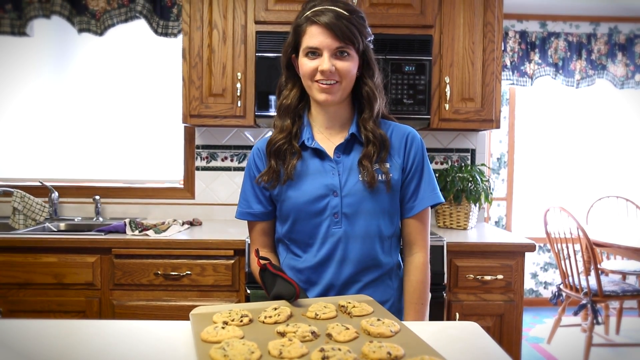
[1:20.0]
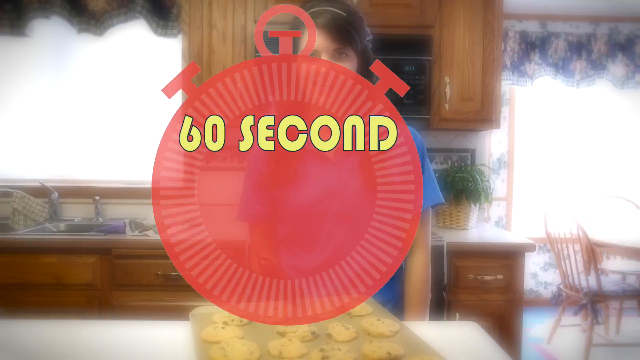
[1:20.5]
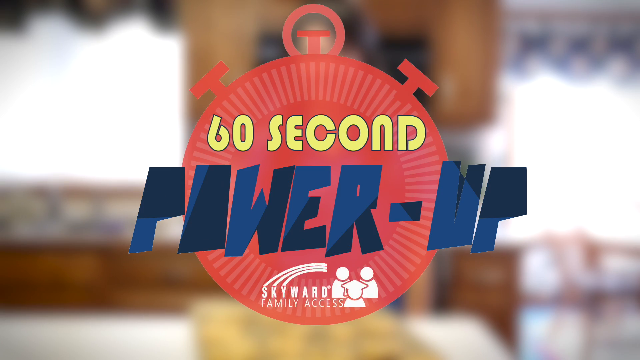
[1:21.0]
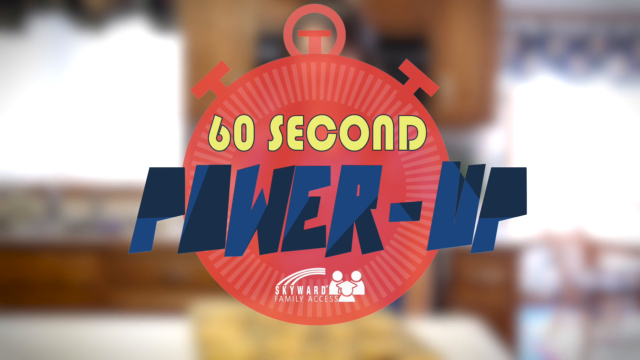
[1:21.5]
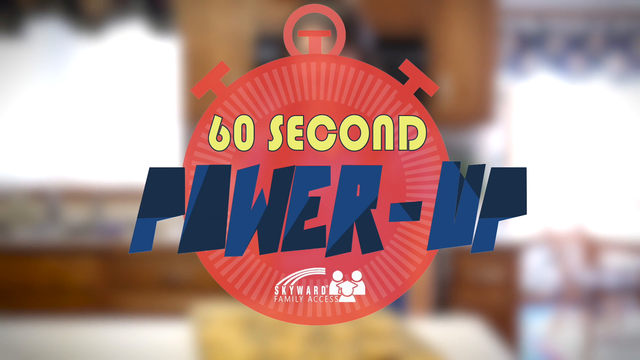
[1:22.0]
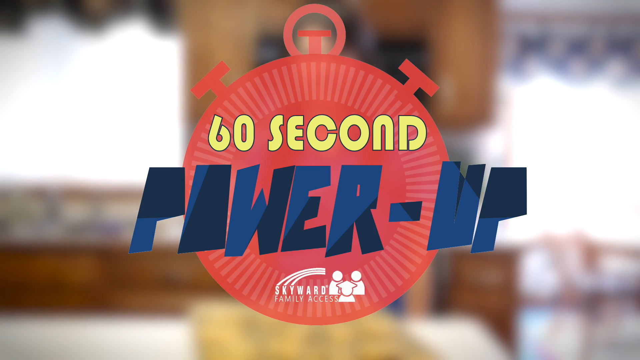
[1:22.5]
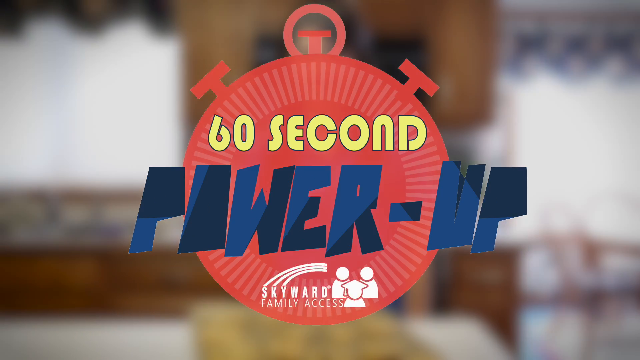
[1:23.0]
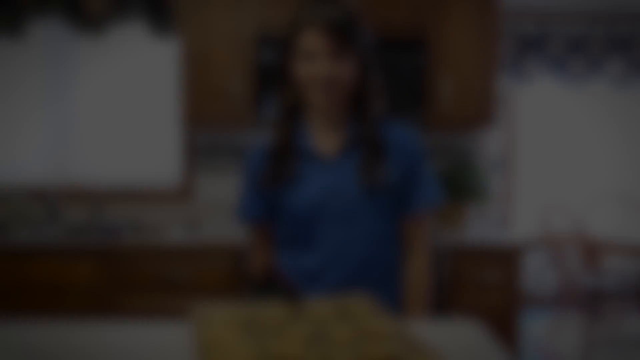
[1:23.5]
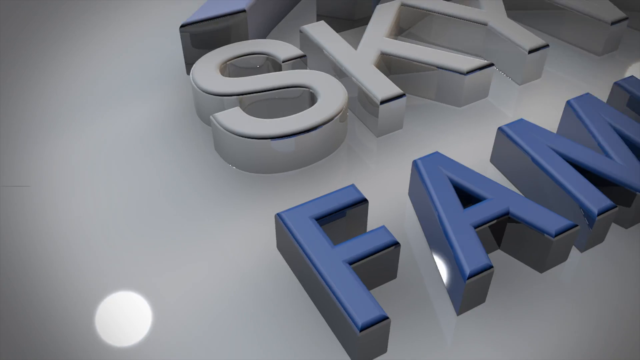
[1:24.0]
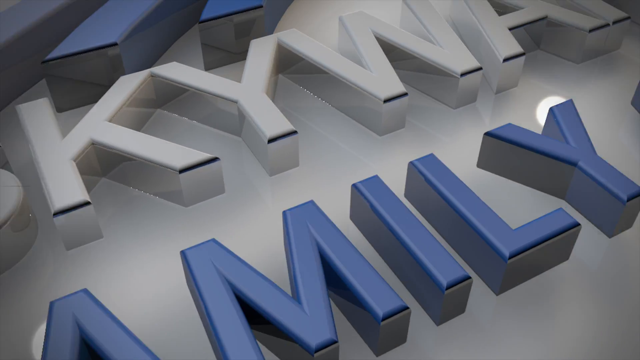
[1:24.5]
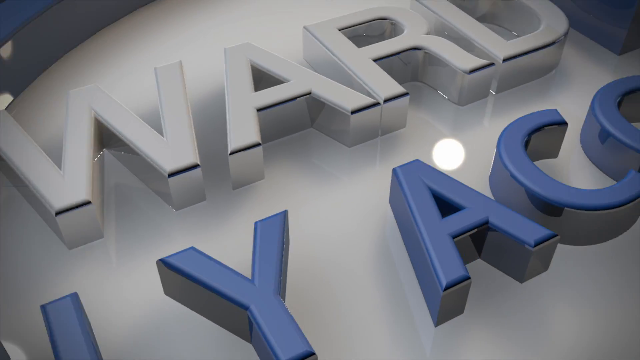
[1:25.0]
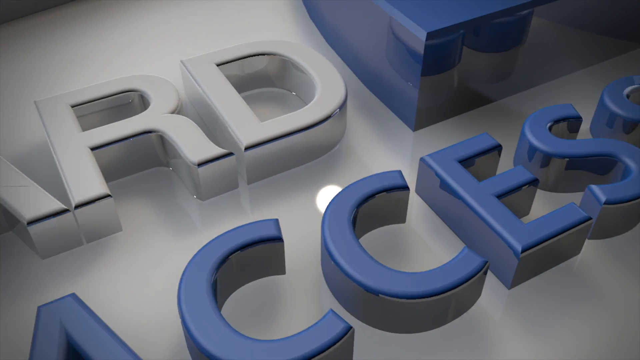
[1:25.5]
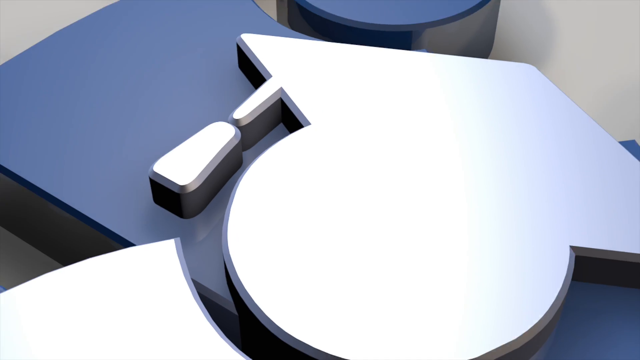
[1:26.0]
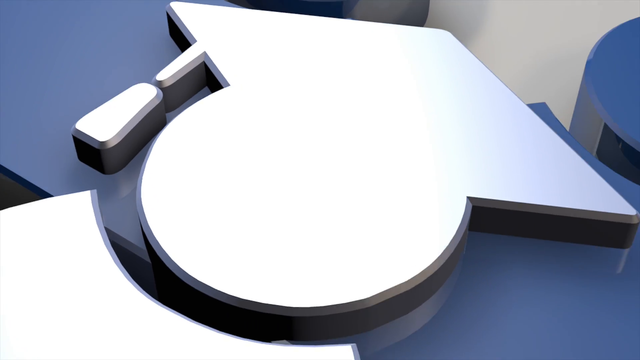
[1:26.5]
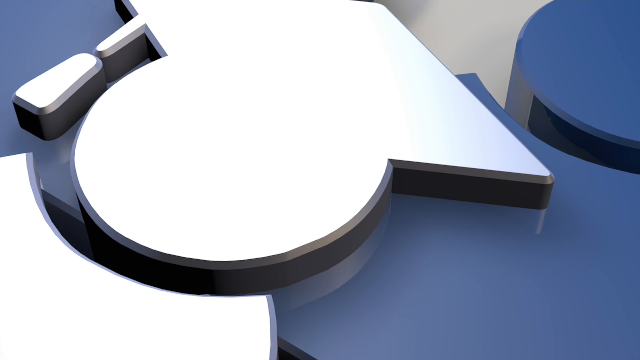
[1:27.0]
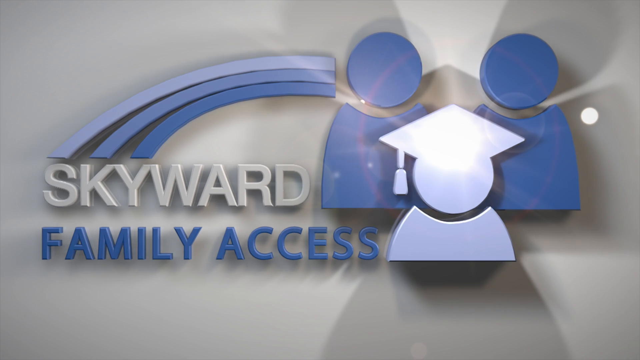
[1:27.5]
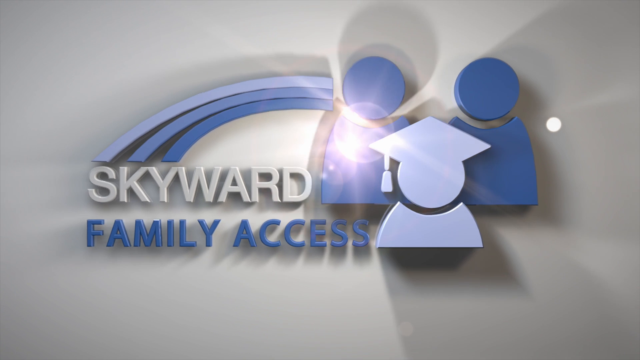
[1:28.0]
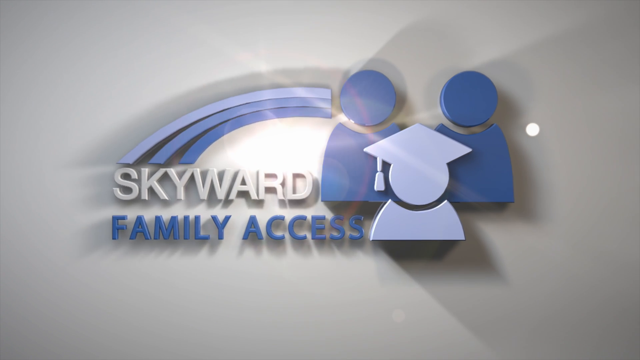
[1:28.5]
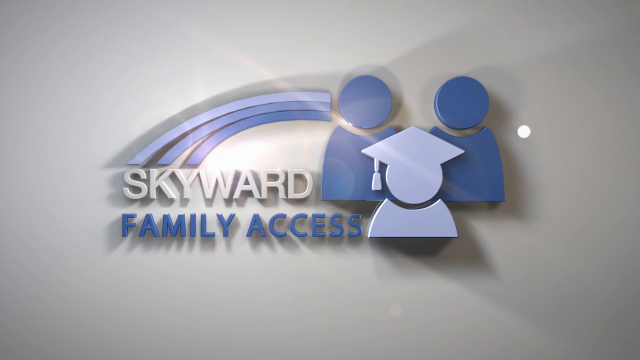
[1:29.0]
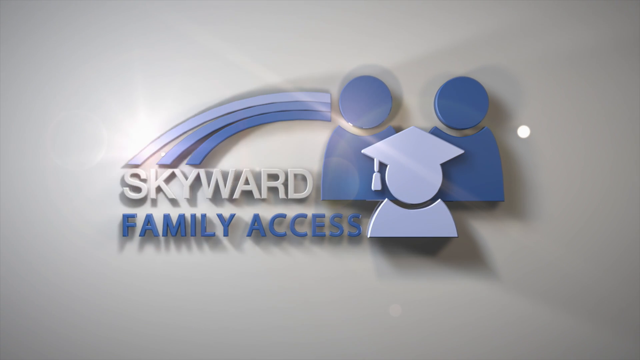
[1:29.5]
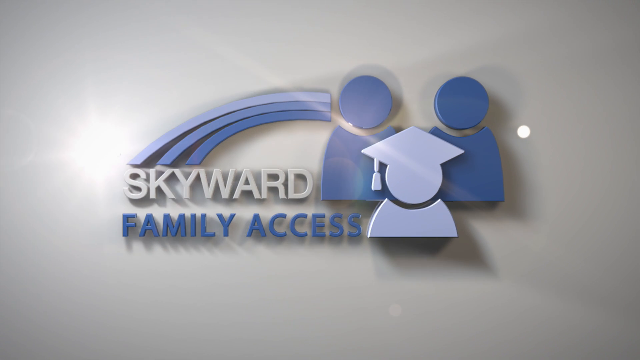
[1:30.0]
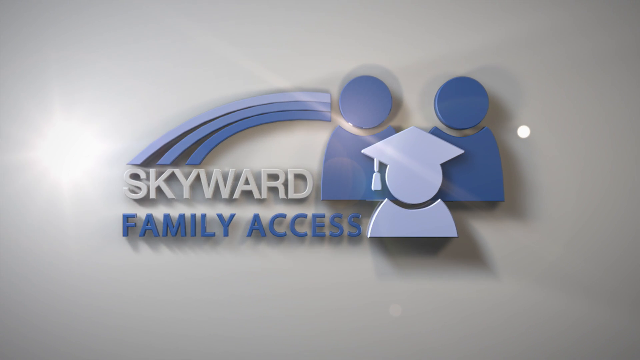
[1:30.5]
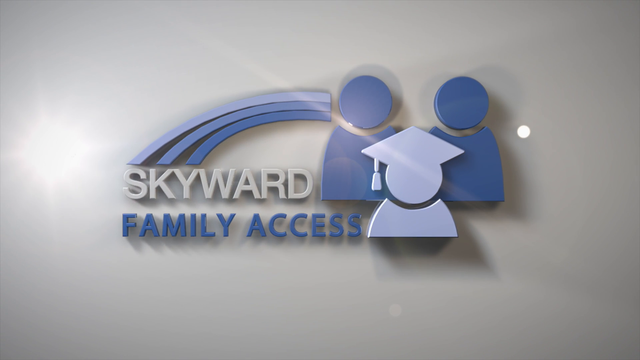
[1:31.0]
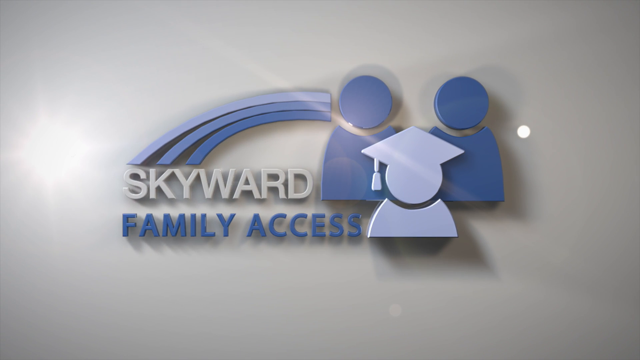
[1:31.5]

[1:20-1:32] A picture of a woman appears briefly before the video goes quickly to a timer graphic reading "60 second power up", with "60 seconds" in yellow, "power up" in dark blue, and the timer in bright red. The video then transitions back to the logo reading "skyward family access", with what looks to be a mock rainbow and blue-looking people standing behind a white person wearing a graduation cap in the middle. Flashes of light that look kind of like stars go around the Skyward part, and in front there is what kind of looks like a beam of light.